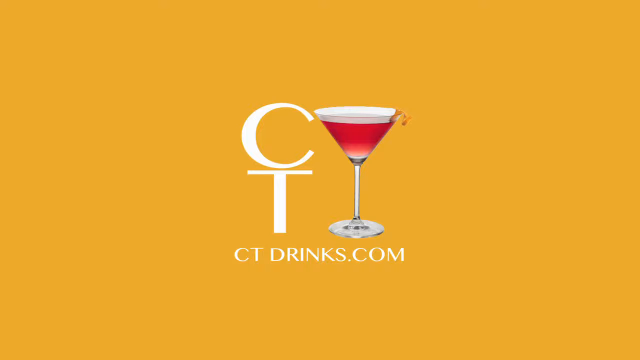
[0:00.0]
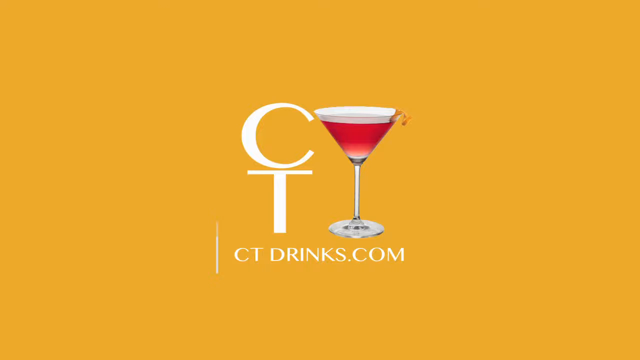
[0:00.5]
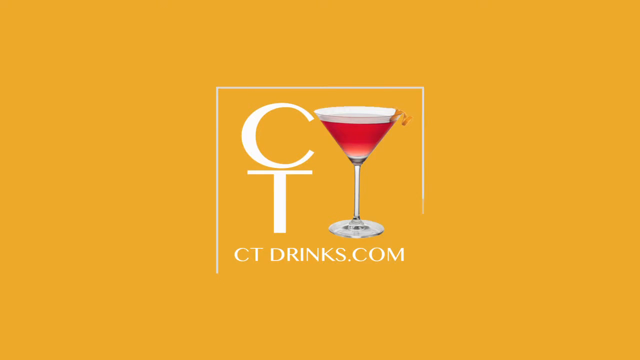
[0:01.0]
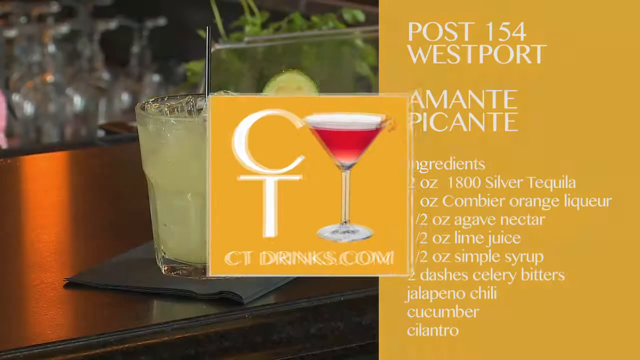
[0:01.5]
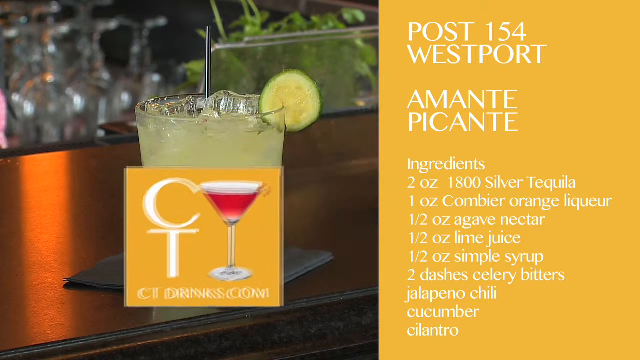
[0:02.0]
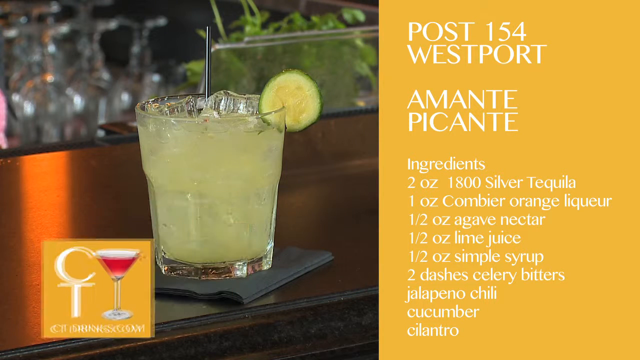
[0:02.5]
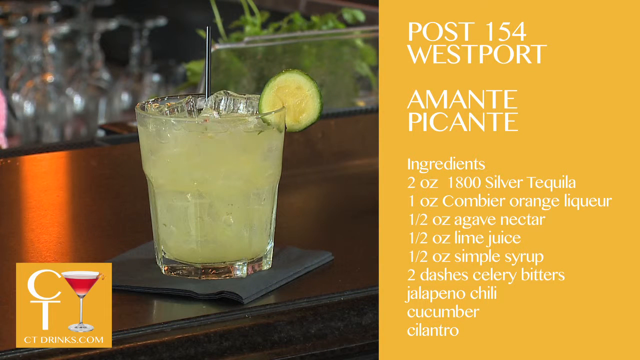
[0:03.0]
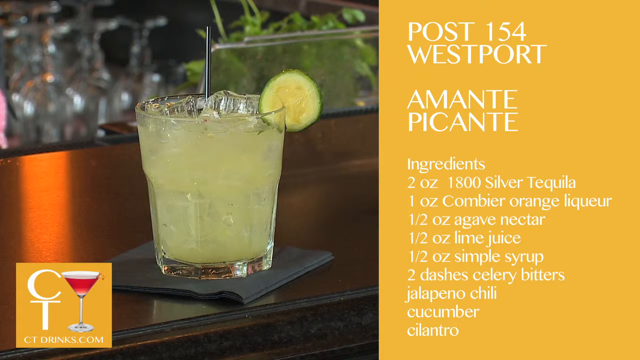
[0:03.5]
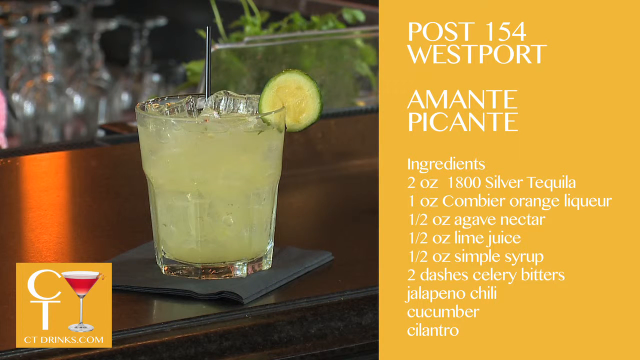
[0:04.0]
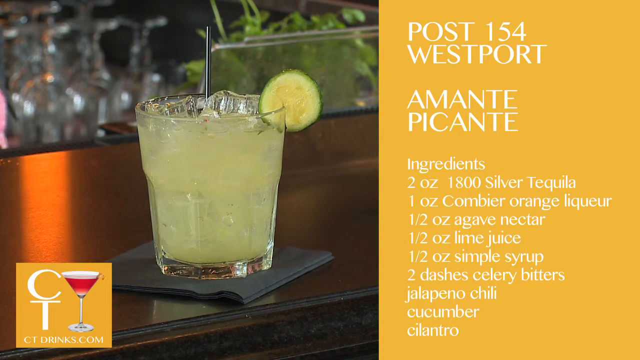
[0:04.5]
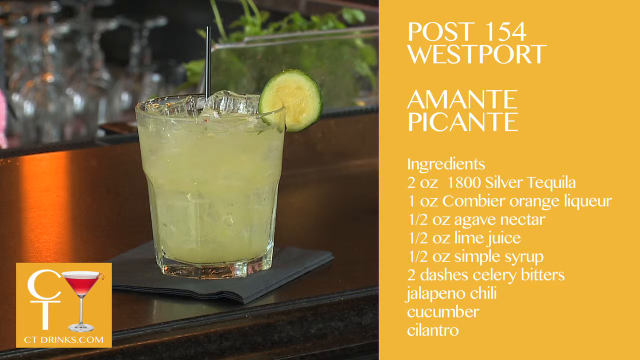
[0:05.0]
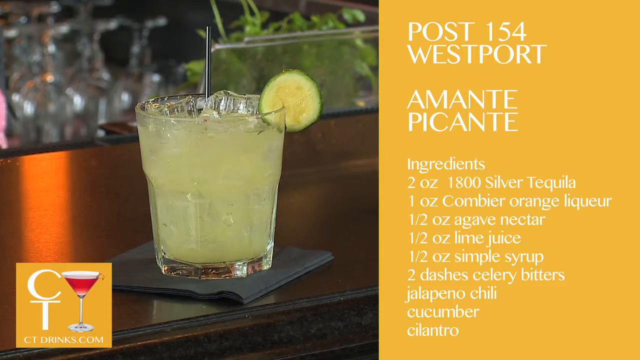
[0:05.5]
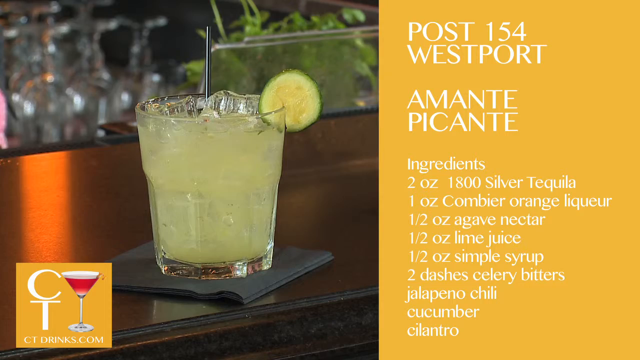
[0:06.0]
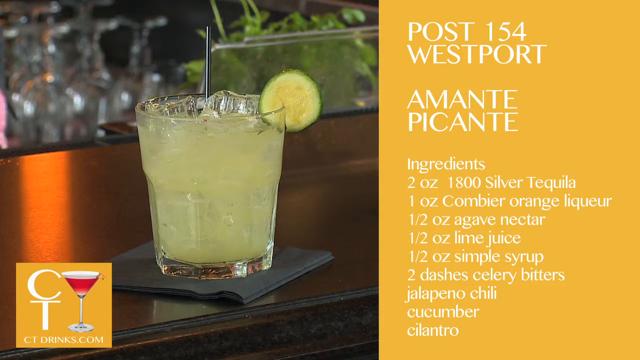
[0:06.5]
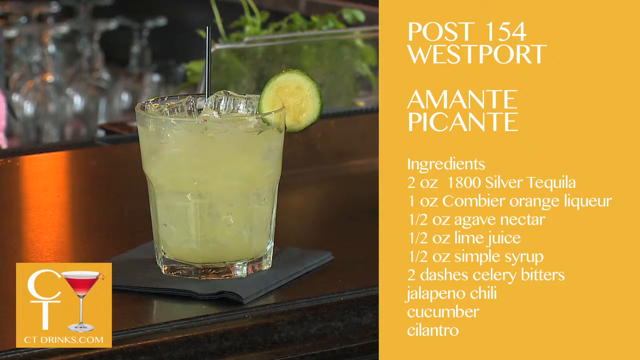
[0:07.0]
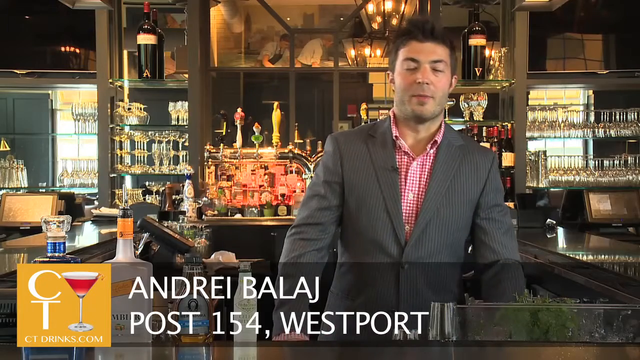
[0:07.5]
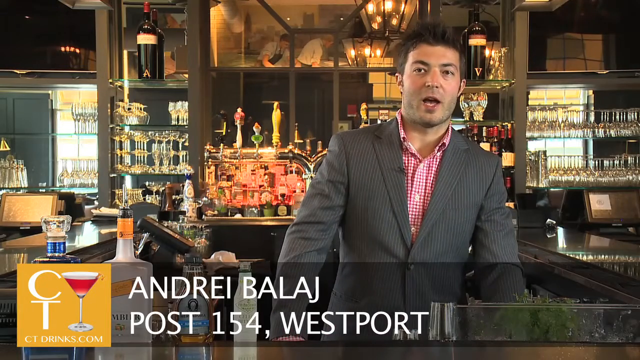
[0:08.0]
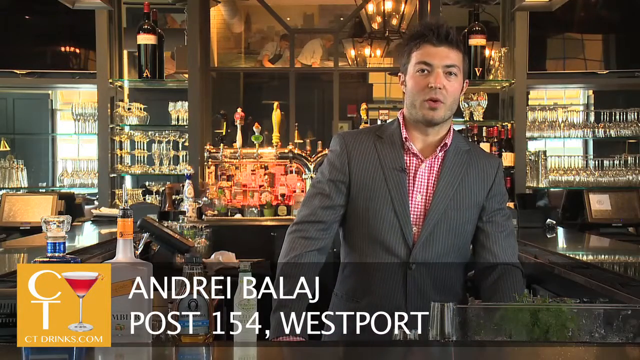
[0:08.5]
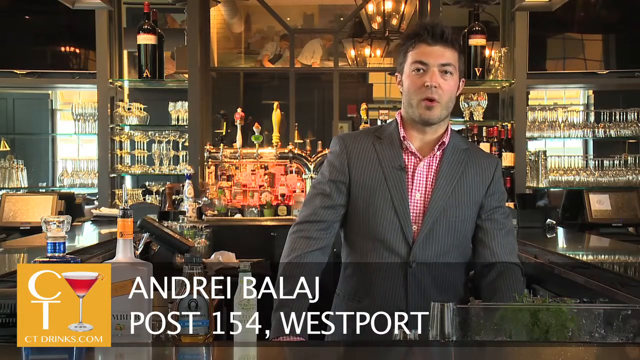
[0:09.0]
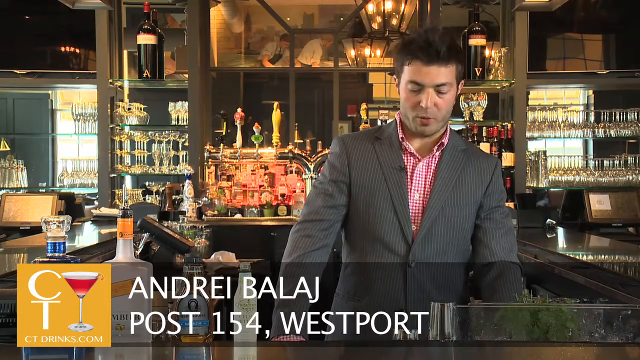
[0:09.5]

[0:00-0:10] The ad opens with a graphic of a triangular drink glass with a C and a T next to it, and at the bottom it says "CT Drinks.com". The backdrop is a bright yellow-orange. The logo then fades to the lower left-hand corner of the screen, and a photograph appears of another drink in a glass with a slice of cucumber on the side; the drink is pale green. On the right side of the screen, against an orange backdrop, the ingredients for the drink are listed. It says "Post 154 Westport Amante Picante" and lists the ingredients for this drink: silver tequila, orange liqueur, agave nectar, lime juice, simple syrup, celery bitters, jalapeno chili, cucumber, and cilantro. Then a bartender appears, a man standing behind a bar, identified as Andrei Balaj, Post 154 Westport. He is standing in front of a very ornate bar.